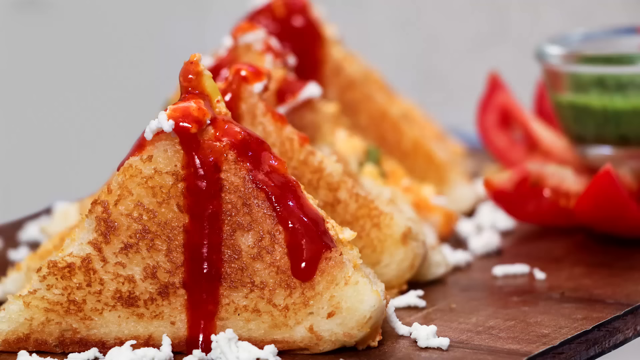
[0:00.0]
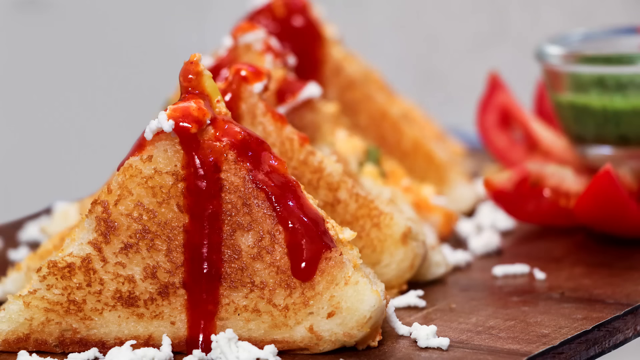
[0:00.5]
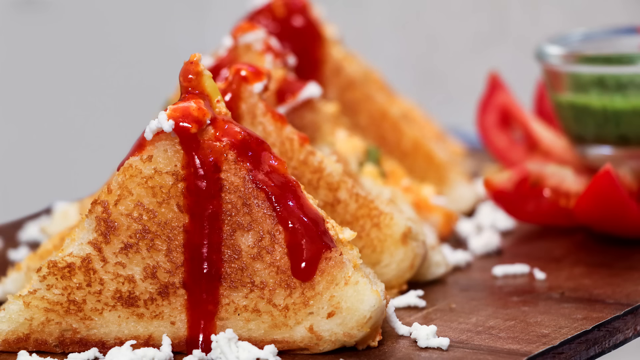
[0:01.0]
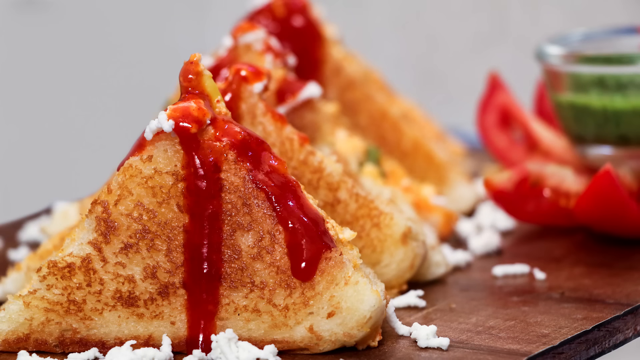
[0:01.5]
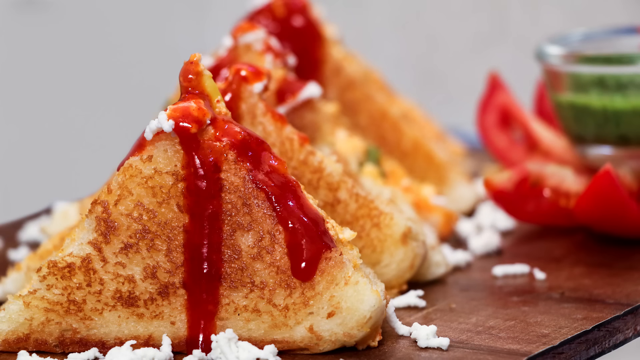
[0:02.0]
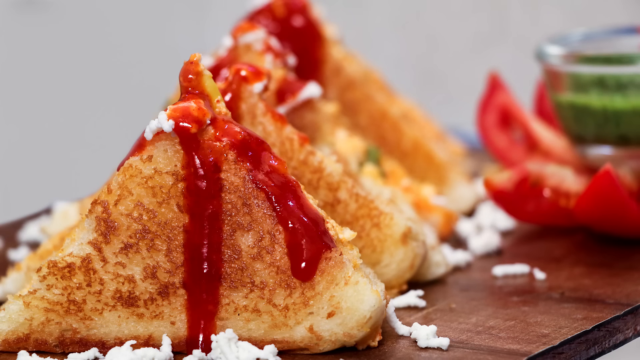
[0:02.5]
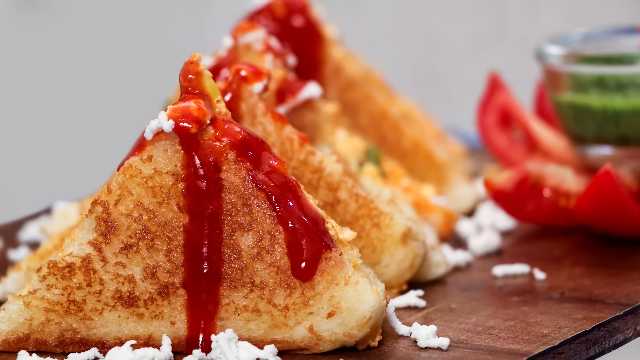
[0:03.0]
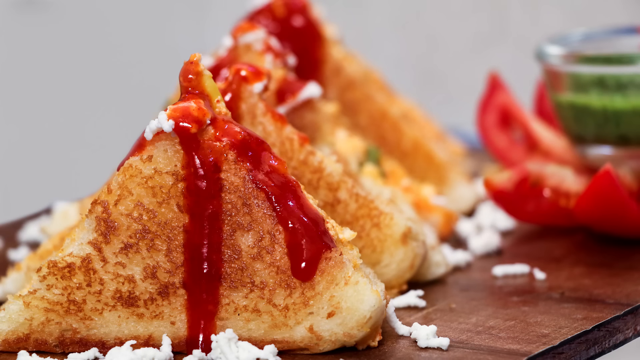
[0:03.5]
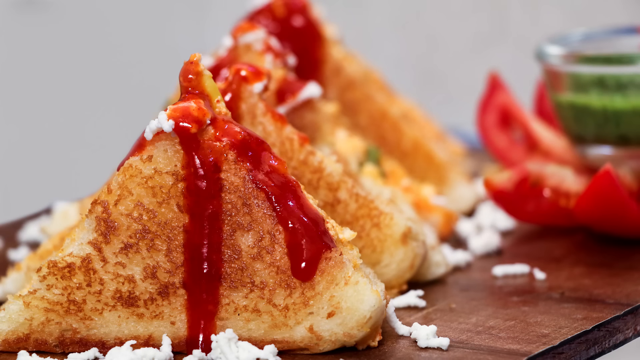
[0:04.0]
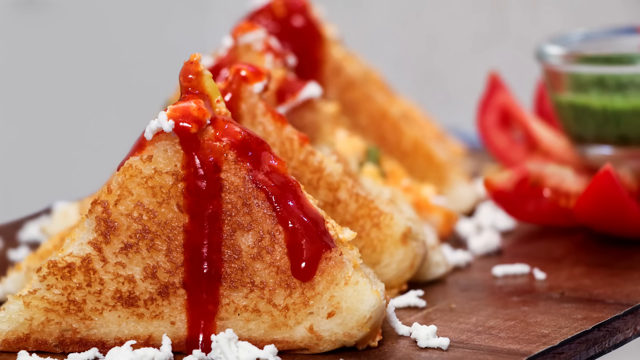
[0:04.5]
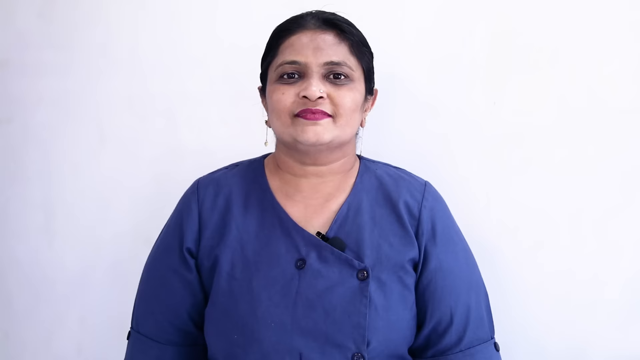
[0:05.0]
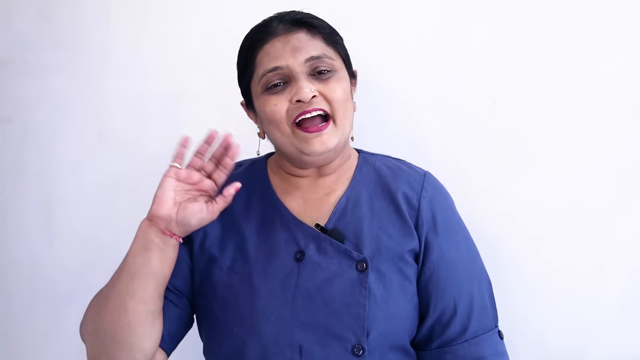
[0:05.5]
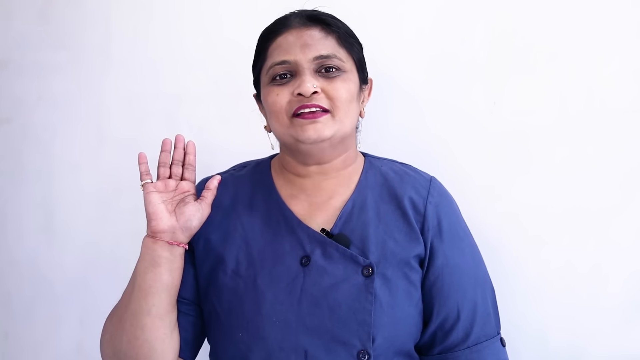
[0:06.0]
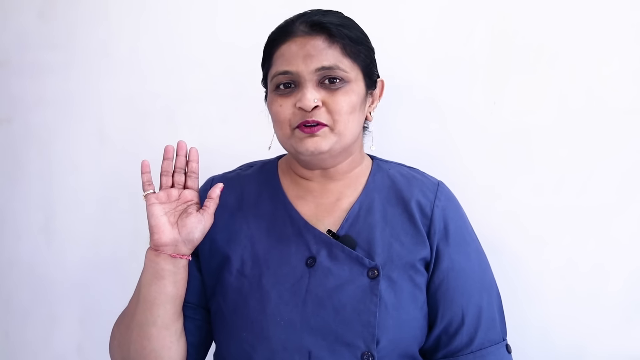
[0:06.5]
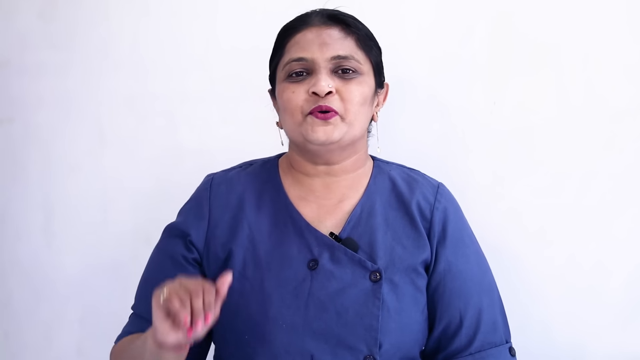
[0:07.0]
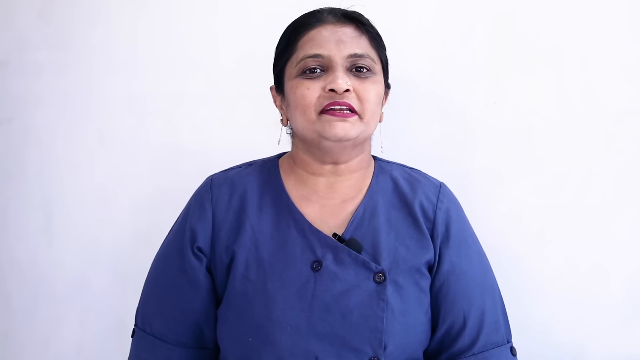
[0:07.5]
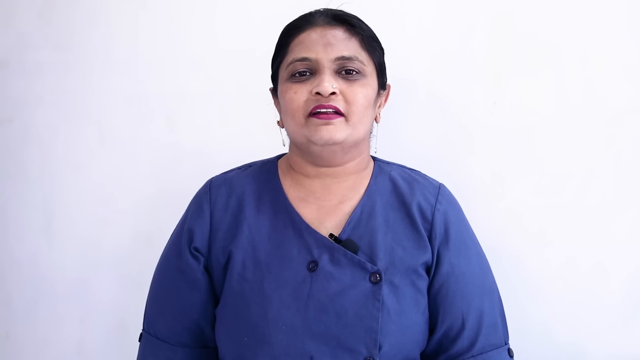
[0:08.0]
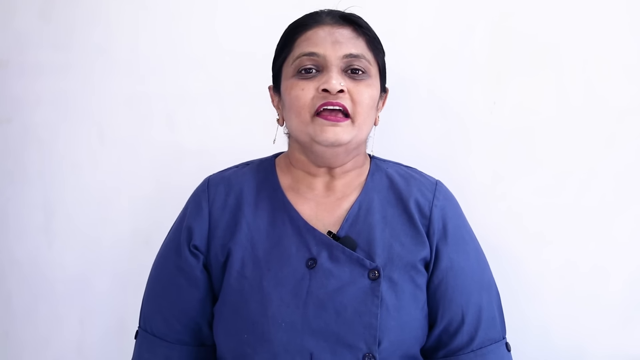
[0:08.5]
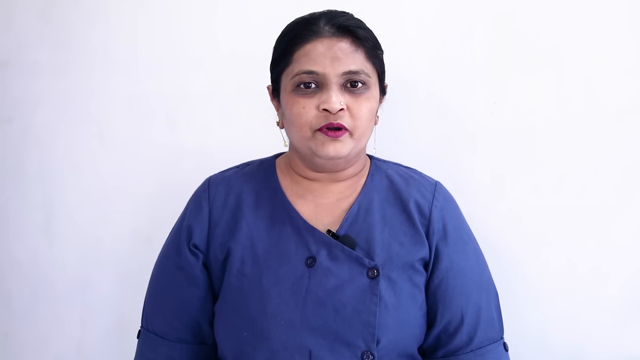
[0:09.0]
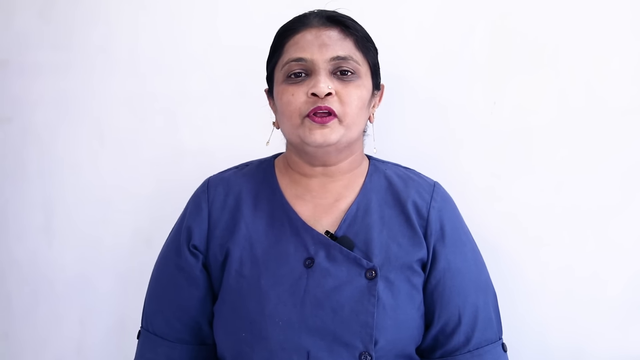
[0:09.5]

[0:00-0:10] A food item sits on its end; it looks kind of toasted, with some kind of strawberry syrup running from the top down to the bottom. There also appears to be some kind of ricotta cheese, as well as maybe a banana or some kind of mango. Three other ones are behind it, but only this one is in focus. Then an Indian woman appears, seeming very happy. She has her right hand up, with a ring on her pinky finger. She has bright white teeth, a nose piercing on her right side, and dangling earrings, and she wears some kind of blouse with only two buttons at the top. She is sitting and talking in front of a white wall.